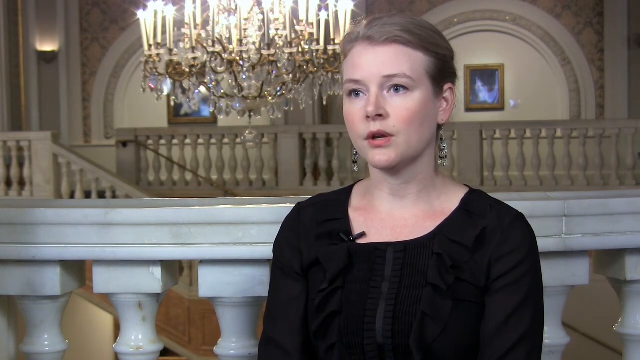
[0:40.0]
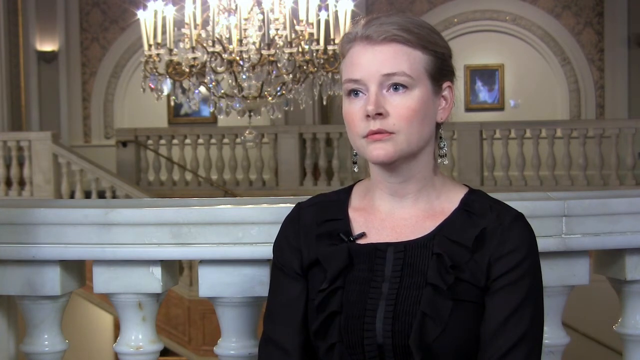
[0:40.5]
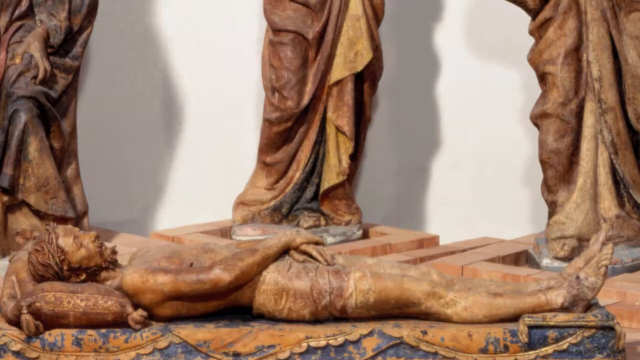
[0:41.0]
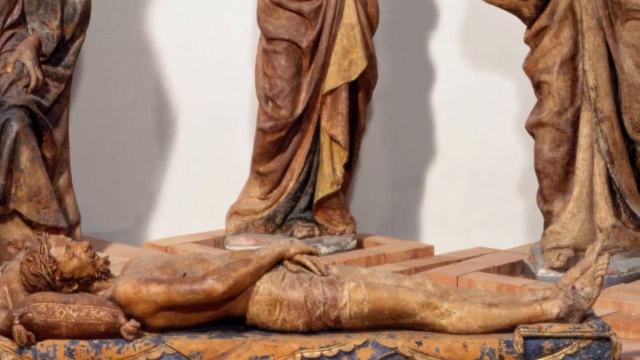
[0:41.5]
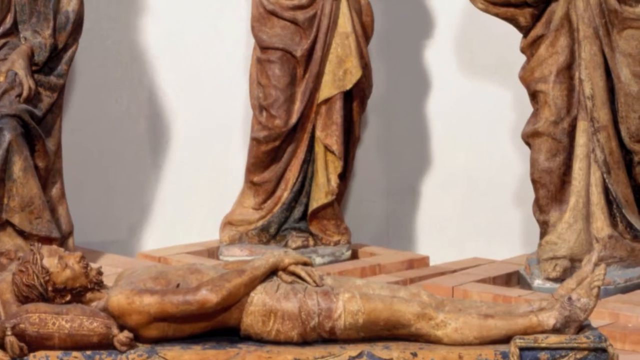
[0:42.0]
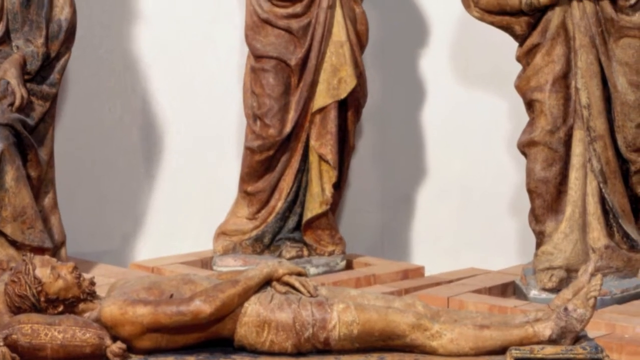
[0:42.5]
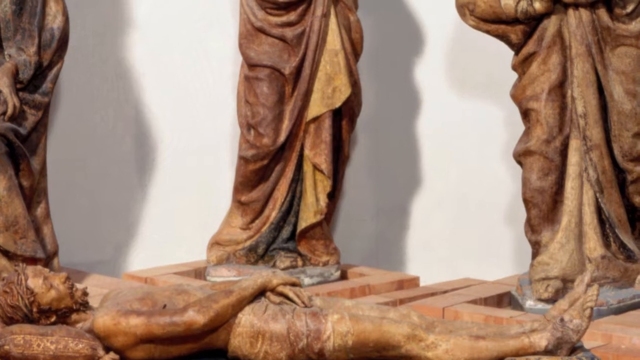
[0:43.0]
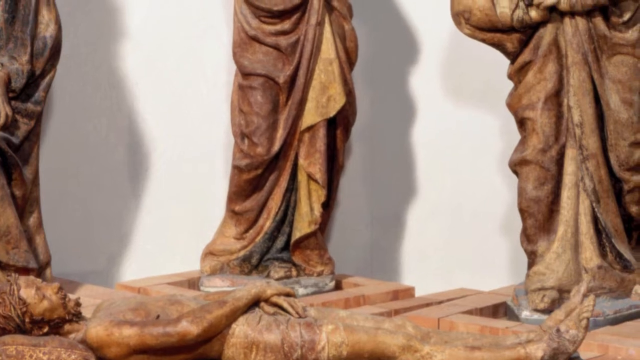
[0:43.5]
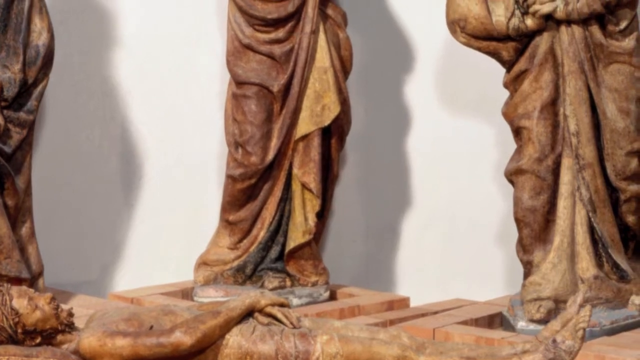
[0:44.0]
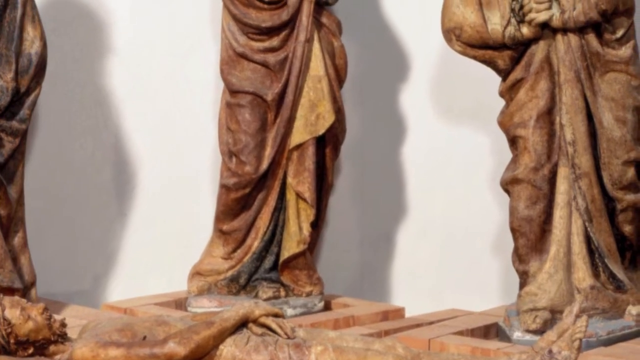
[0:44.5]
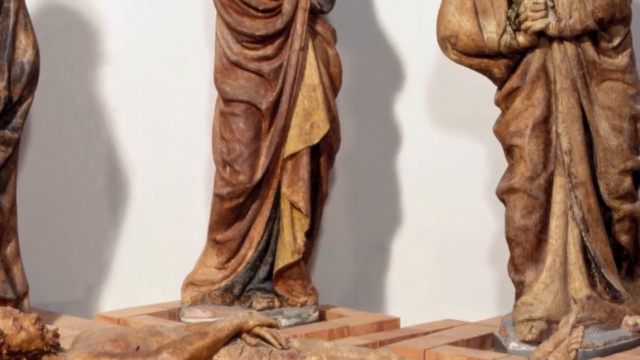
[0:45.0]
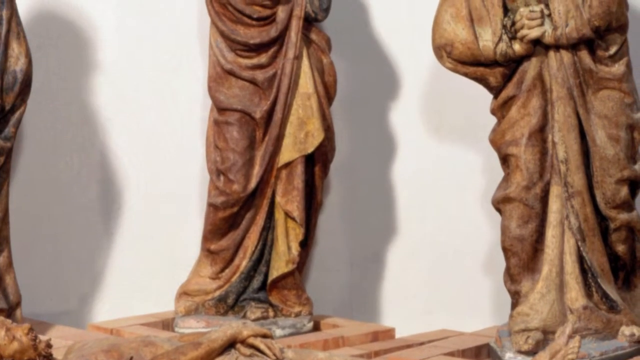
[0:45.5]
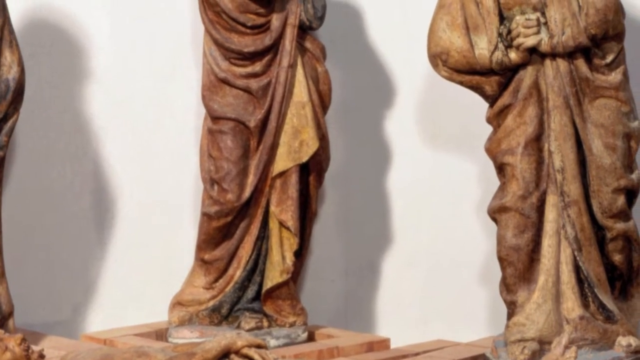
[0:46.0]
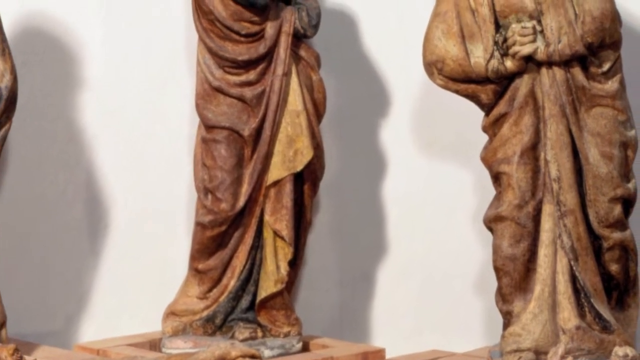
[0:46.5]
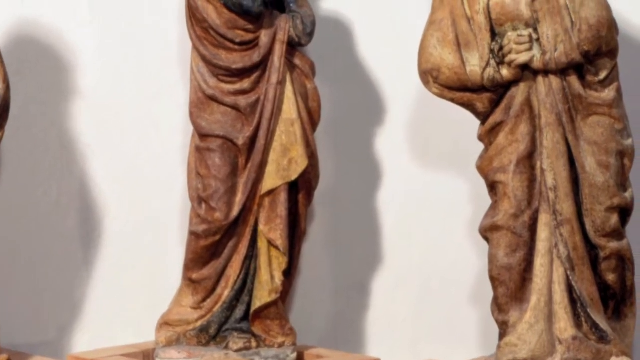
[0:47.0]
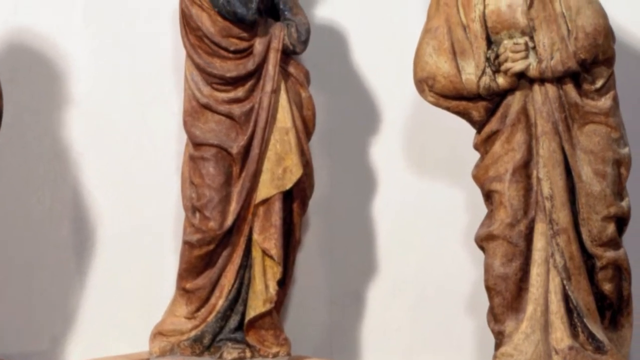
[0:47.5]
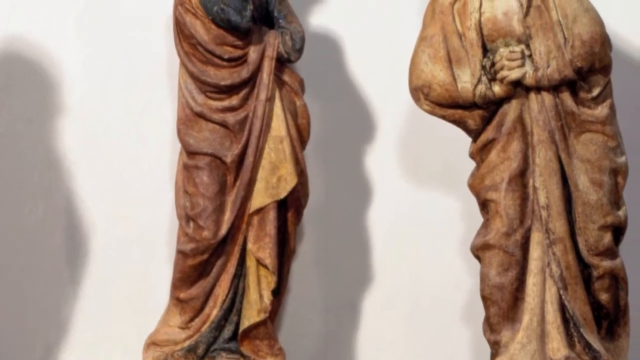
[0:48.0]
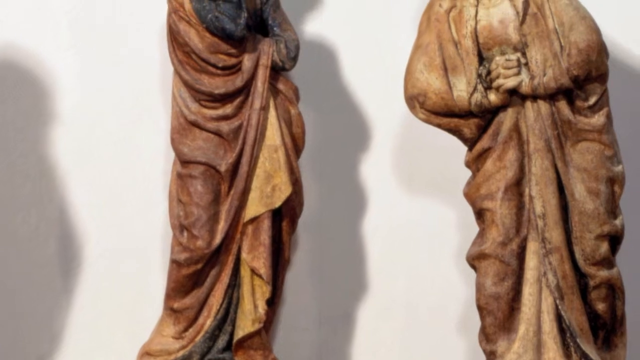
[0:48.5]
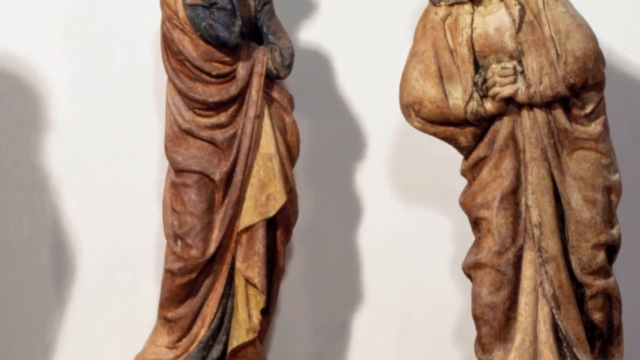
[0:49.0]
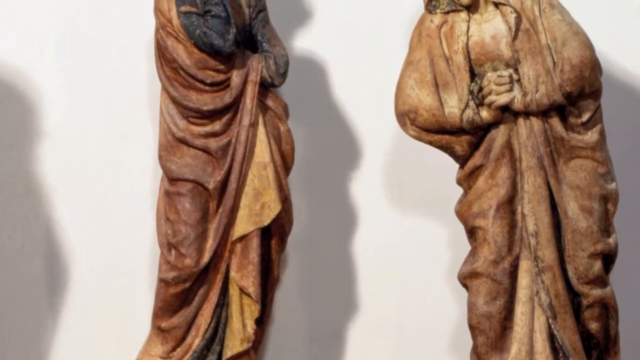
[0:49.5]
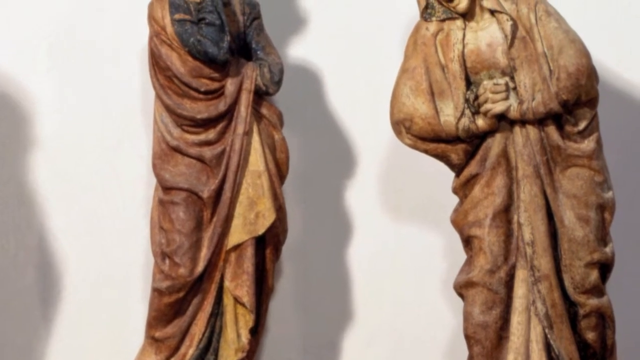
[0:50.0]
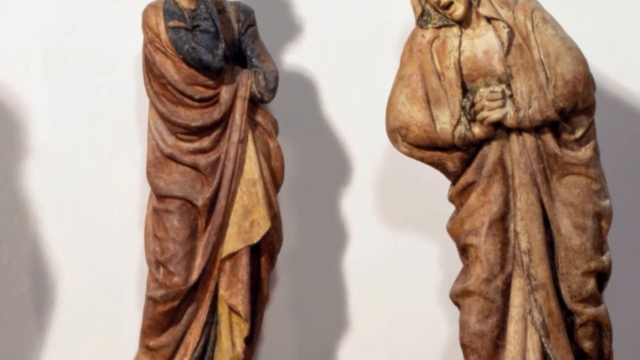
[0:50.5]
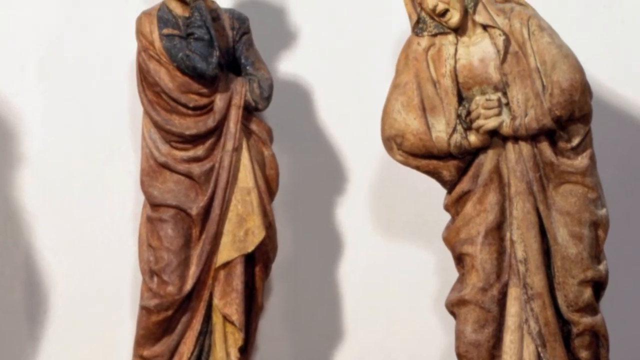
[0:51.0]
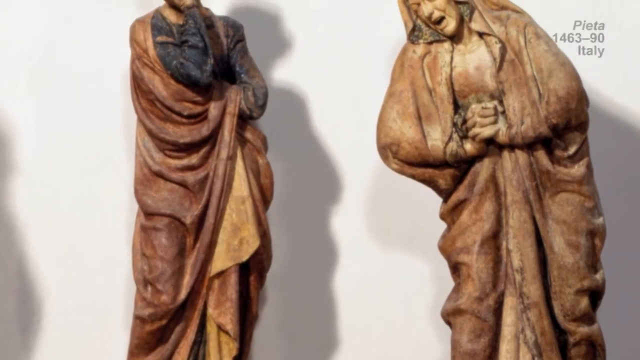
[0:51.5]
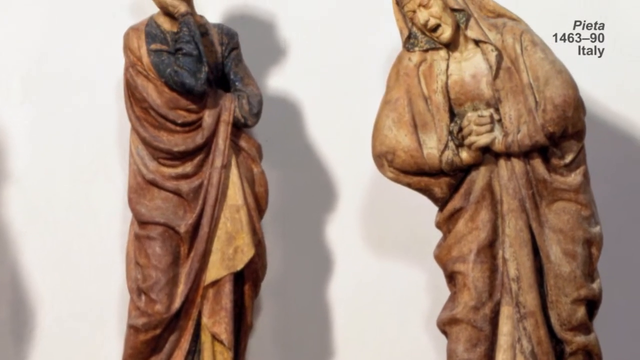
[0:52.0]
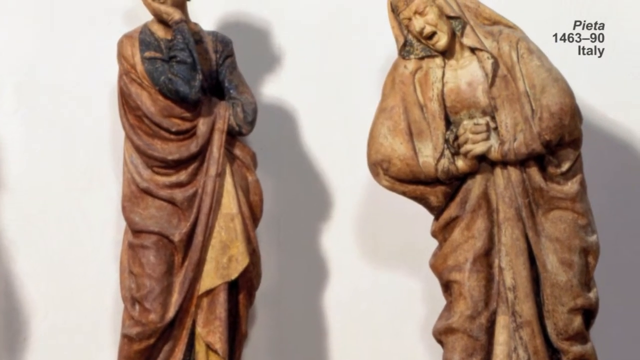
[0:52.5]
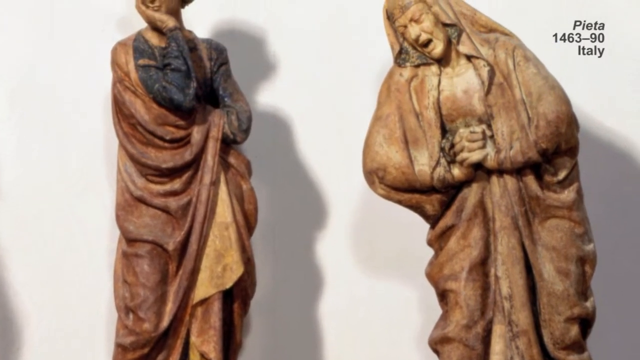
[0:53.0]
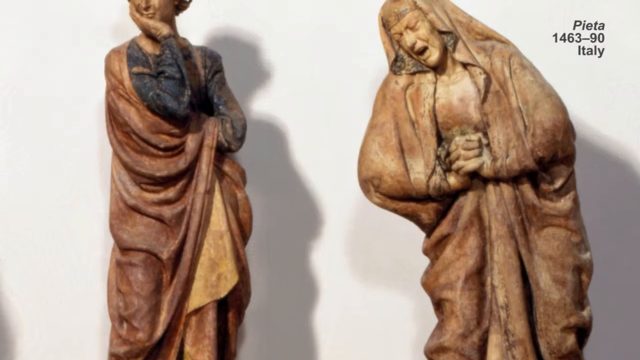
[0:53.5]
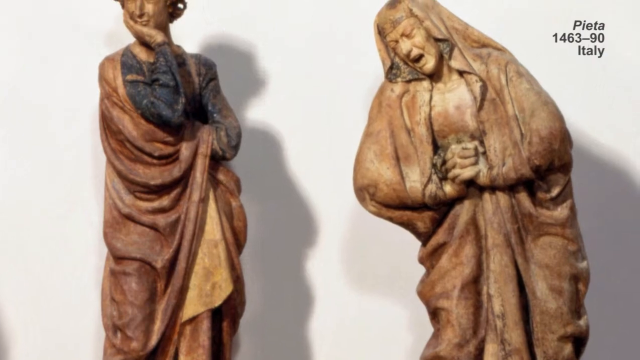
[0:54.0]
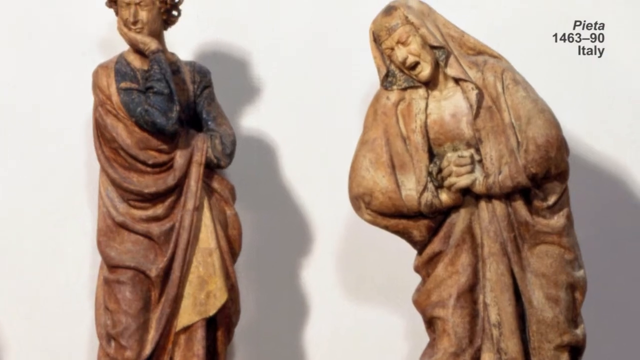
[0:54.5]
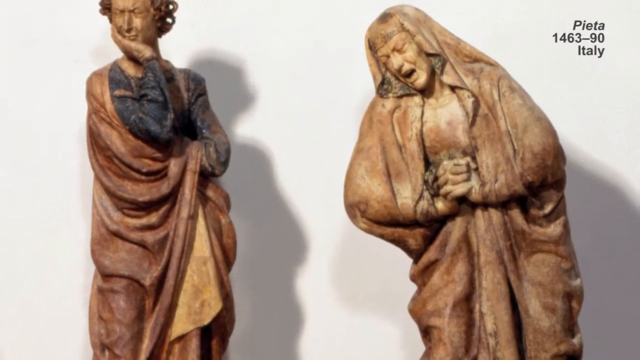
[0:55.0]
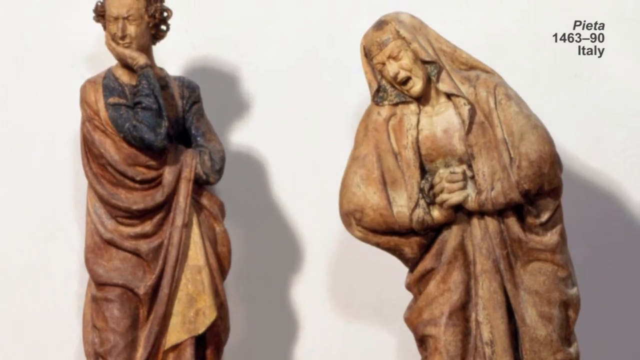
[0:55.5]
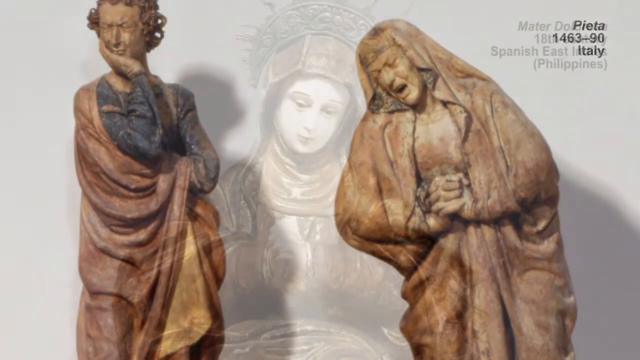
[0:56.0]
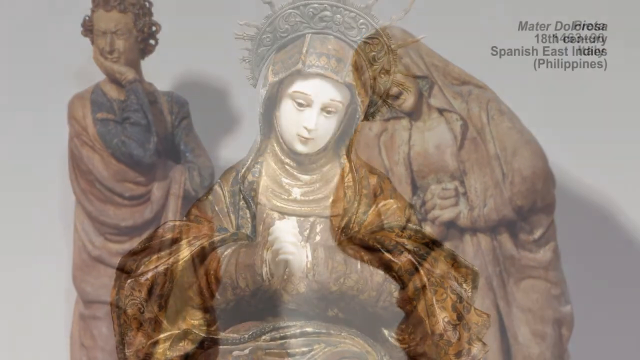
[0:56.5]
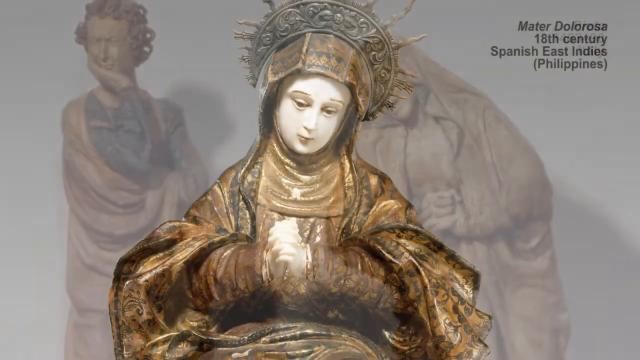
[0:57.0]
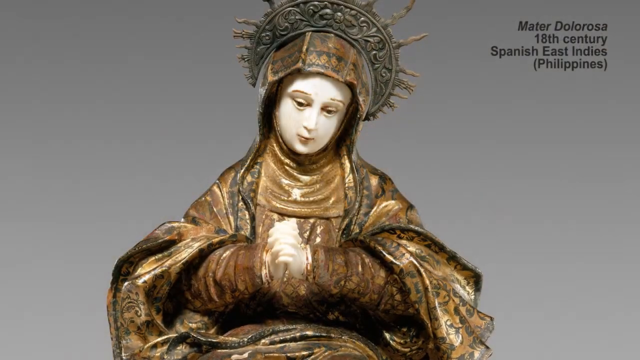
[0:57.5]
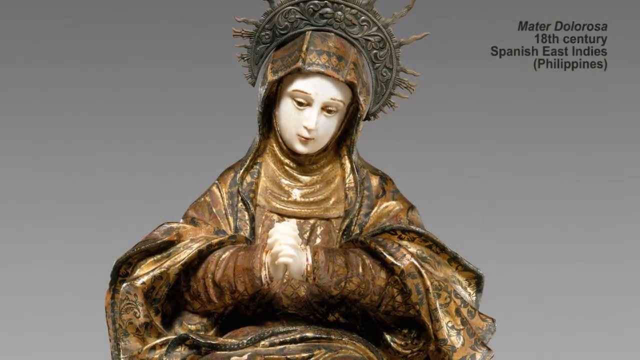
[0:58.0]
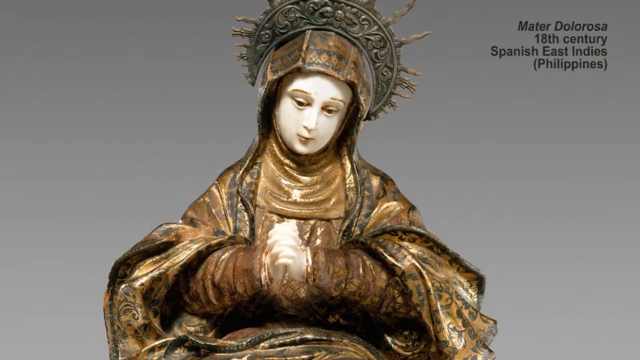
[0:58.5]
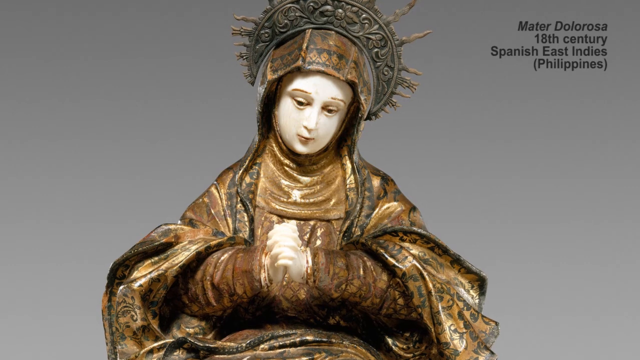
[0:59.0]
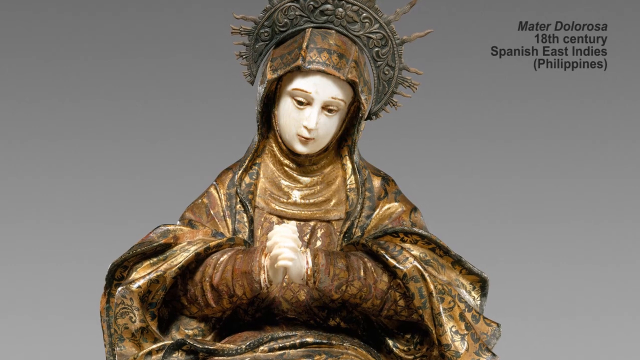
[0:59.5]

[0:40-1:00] The woman nods confidently, and the video cuts to what looks like a statue of Jesus Christ lying on the floor, likely already dead. Three statues of people standing are behind him, possibly all part of one statue. The camera zooms up toward the right side toward two of those people, and as it pans up, text appears in the upper right corner reading "Pieta 1463 to 90 Italy." The figures look like his disciples looking on; the statue on the right has its hands clasped together tightly and an agonized look on its face while looking down at Jesus' body. The video then cuts to another statue that looks like a Virgin Mary type of figure with a metal crown over the head. She looks down with her head cocked toward the right side of the screen and her hands clasped together in front of her. Text reads "Mater Dolorosa 18th century Spanish East Indies Philippines." The camera slowly zooms in on the statue.